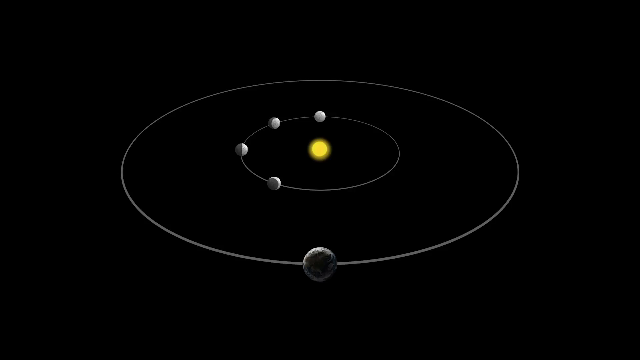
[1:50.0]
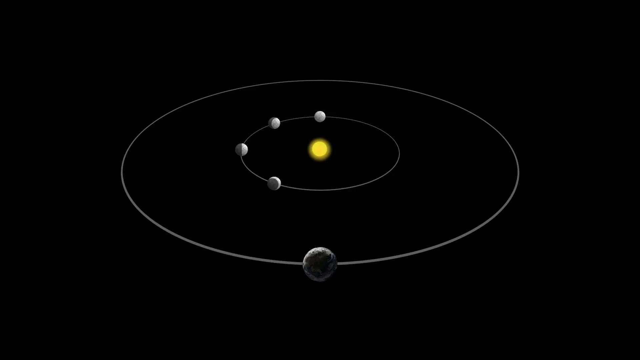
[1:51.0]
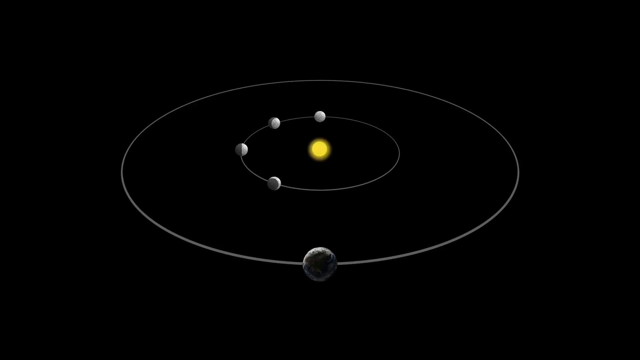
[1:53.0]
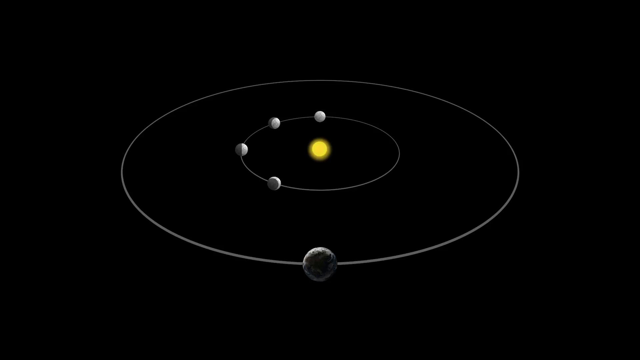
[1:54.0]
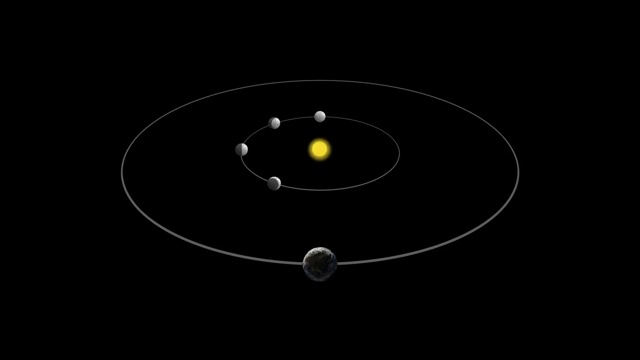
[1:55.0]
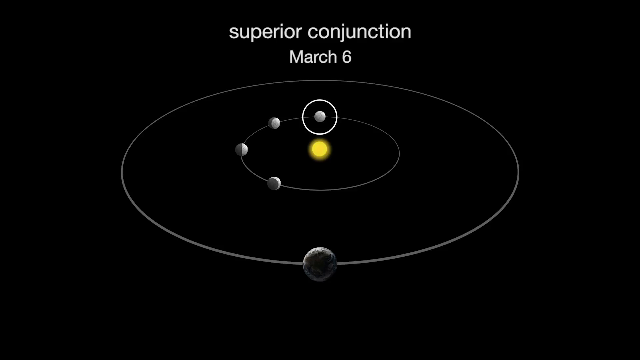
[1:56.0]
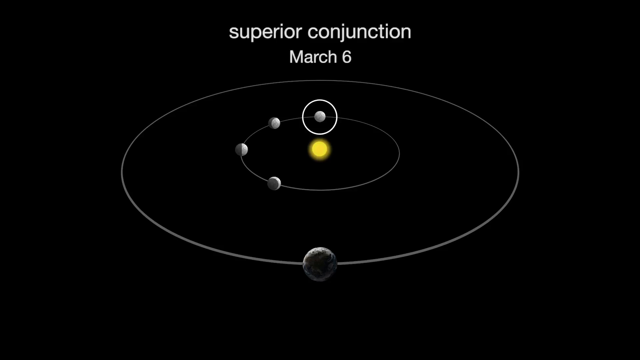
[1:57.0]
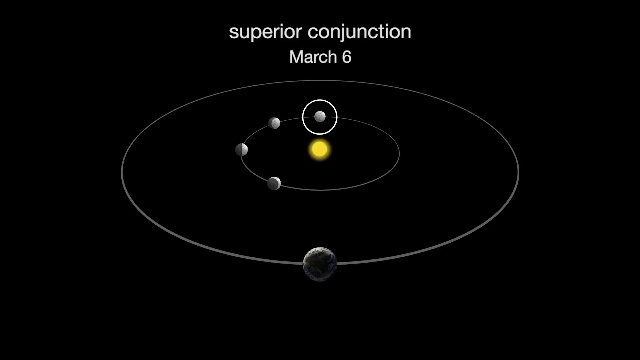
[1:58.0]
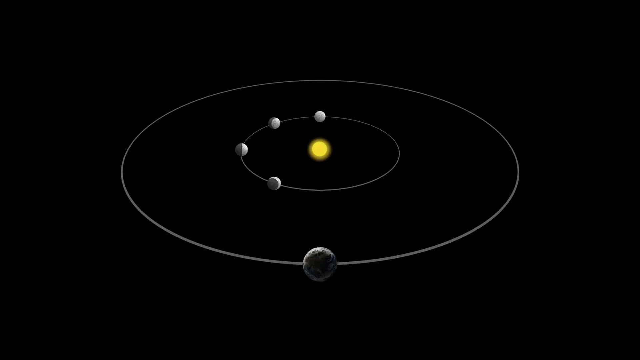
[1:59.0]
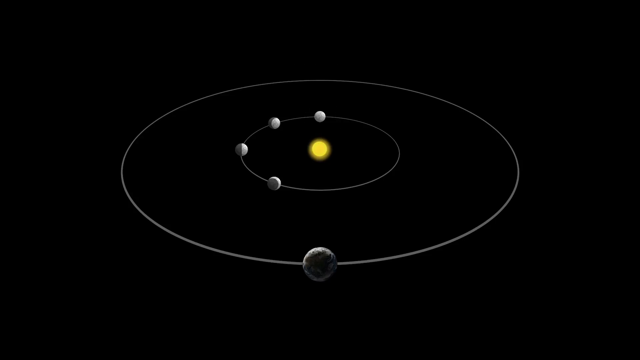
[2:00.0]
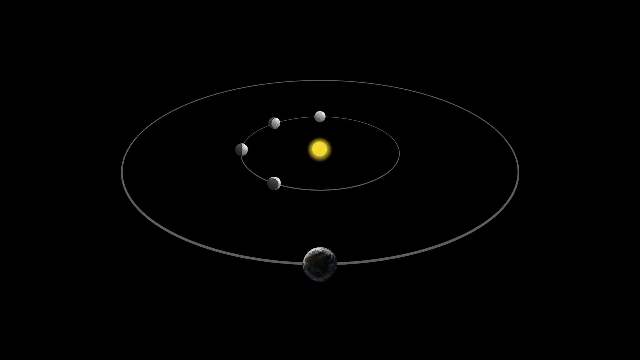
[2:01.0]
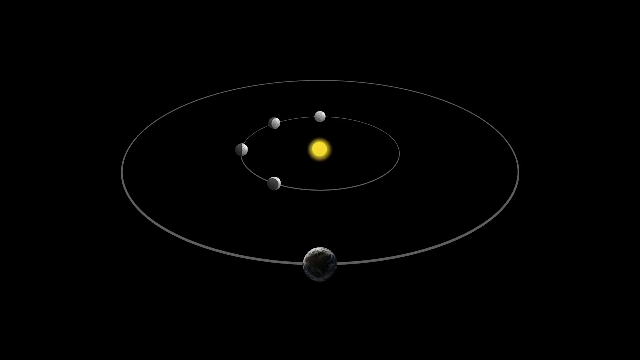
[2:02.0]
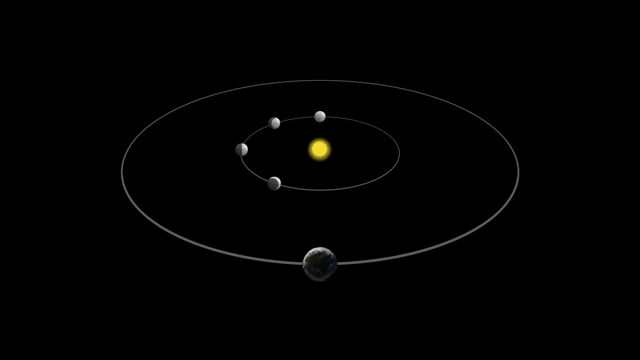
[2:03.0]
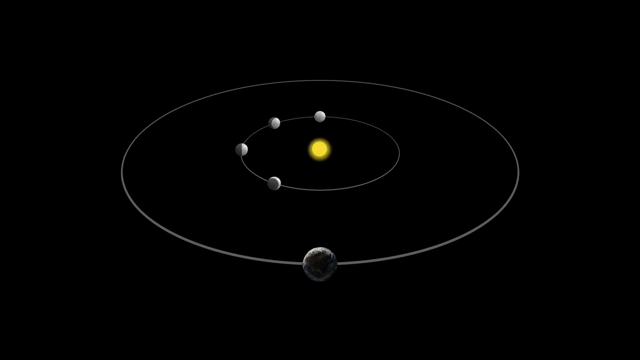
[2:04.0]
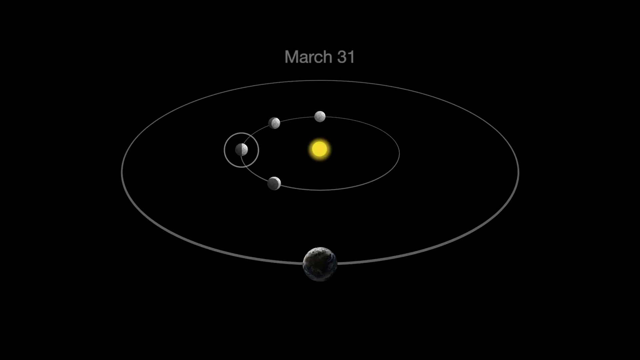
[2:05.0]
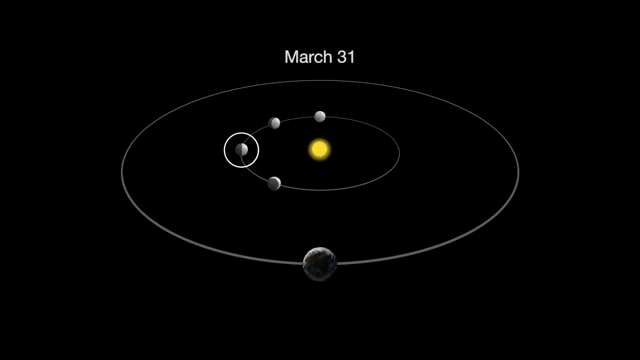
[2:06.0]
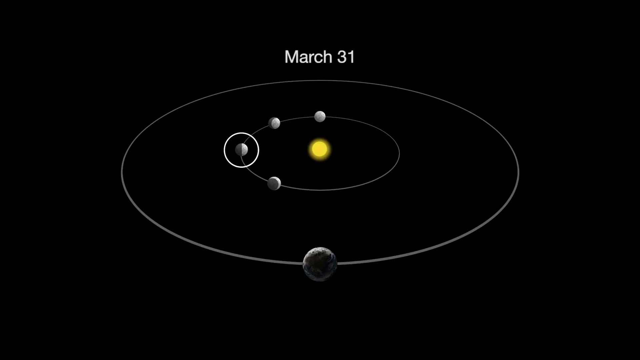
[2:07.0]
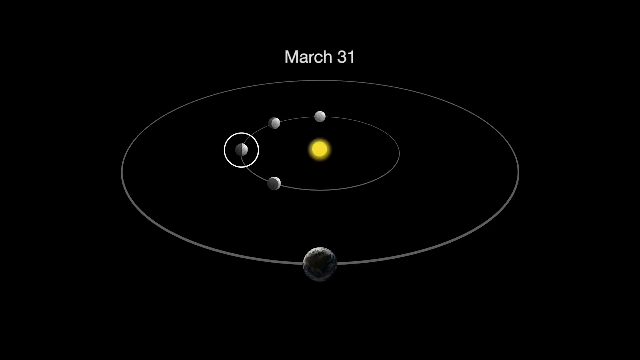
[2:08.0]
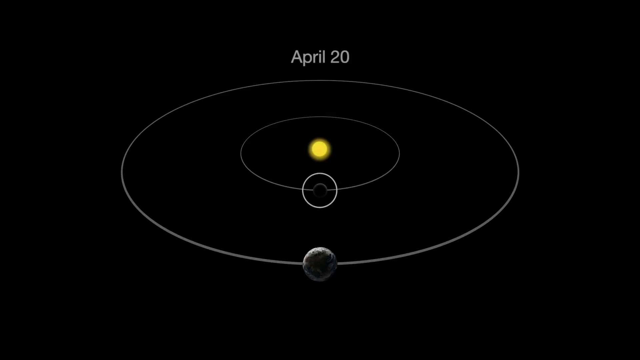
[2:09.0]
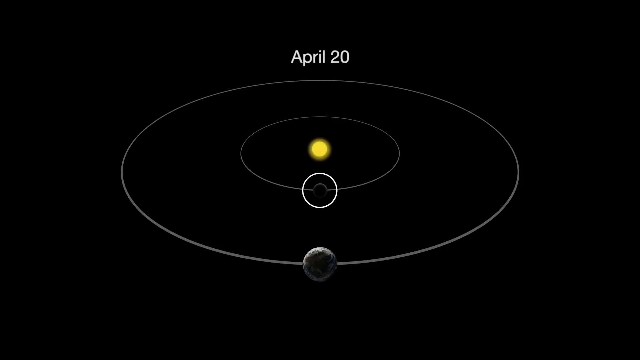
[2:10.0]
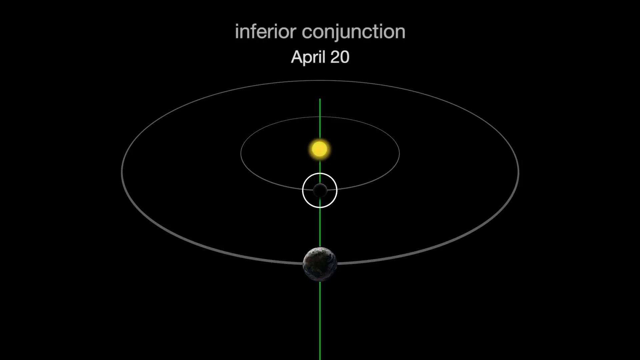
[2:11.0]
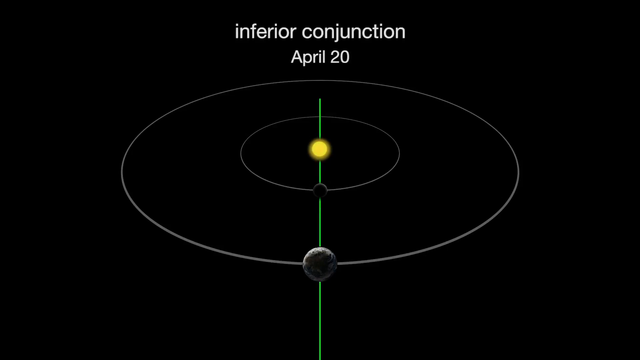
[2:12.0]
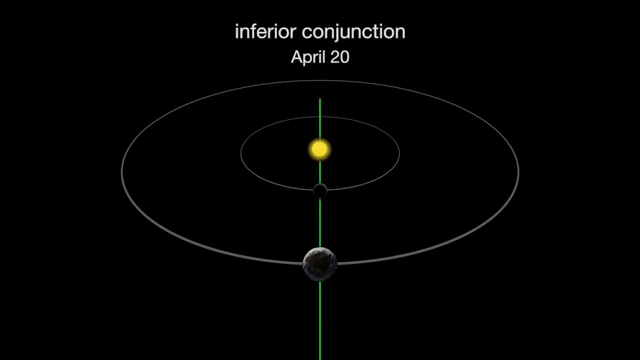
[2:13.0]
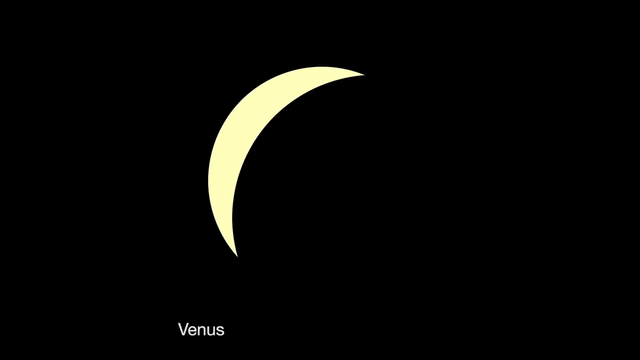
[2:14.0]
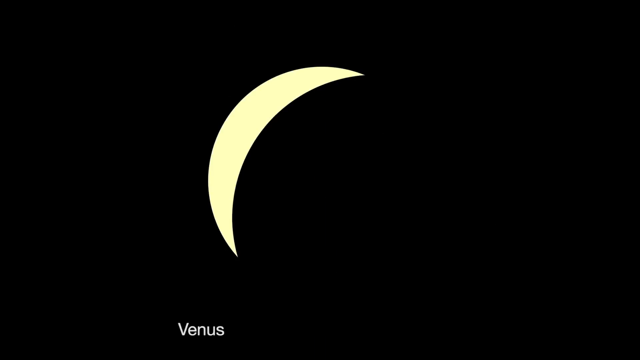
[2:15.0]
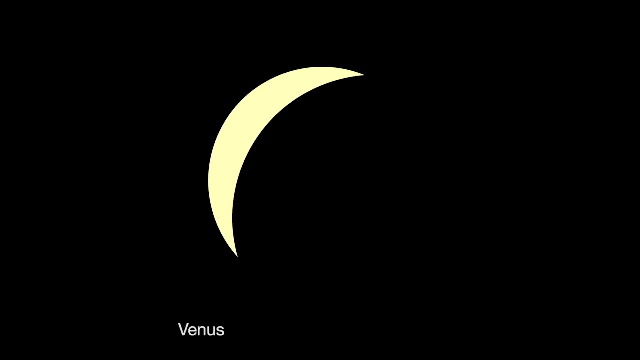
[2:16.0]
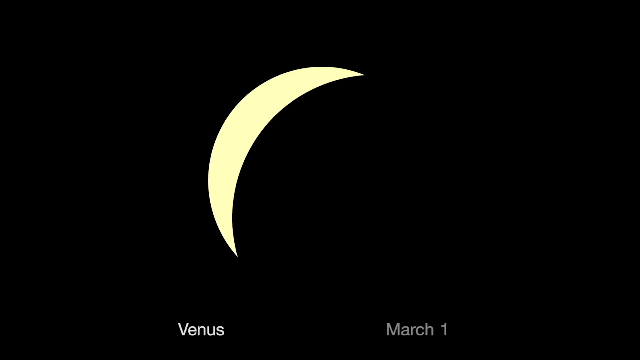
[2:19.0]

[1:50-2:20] The solar system diagram continues, now showing four small planet-like structures orbiting the Sun where Mercury was, apparently four images of Mercury showing where it would be in its orbit and what it looks like. First the topmost one is circled, with text at the top reading "superior conjunction, March 6th". Next the one at the far left is circled and labeled "March 31st"; it has a half-shaded look, with the left side dark and the right side light. Finally the bottom-most one, nearest the Sun, is circled, labeled "April 20th" and "inferior conjunction".